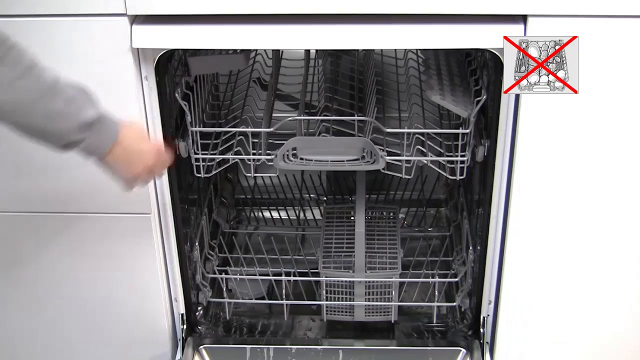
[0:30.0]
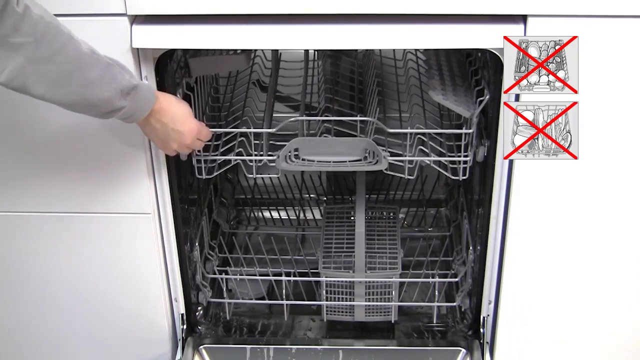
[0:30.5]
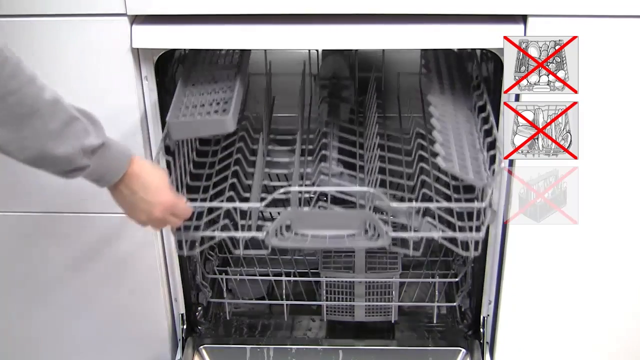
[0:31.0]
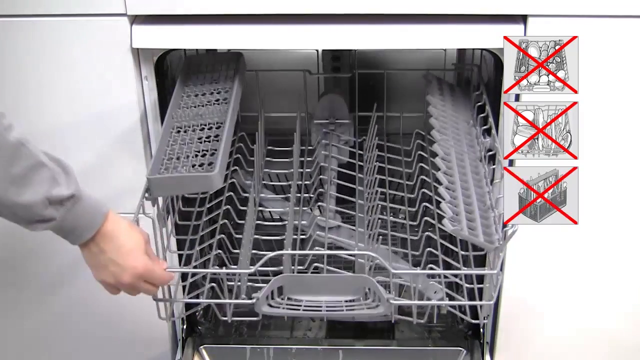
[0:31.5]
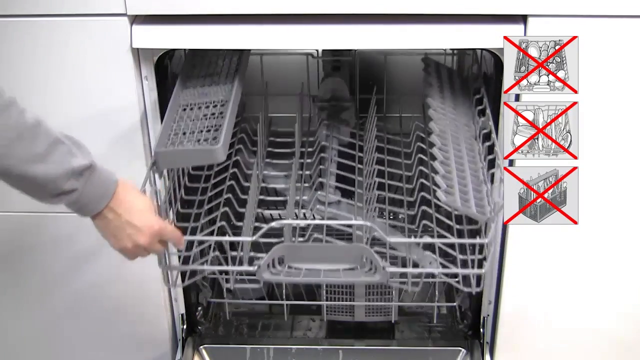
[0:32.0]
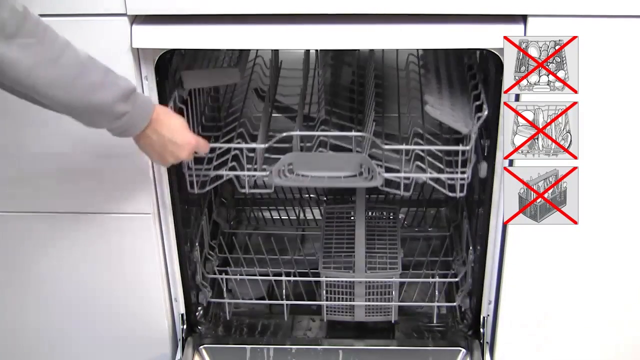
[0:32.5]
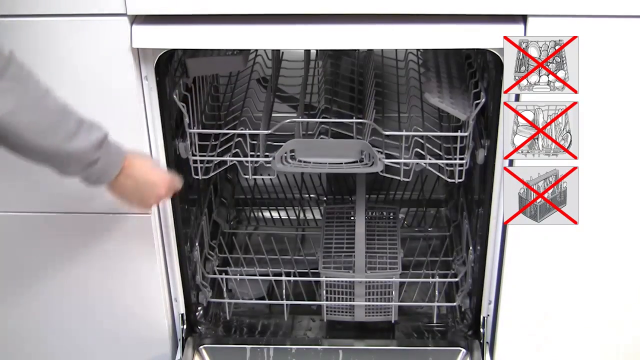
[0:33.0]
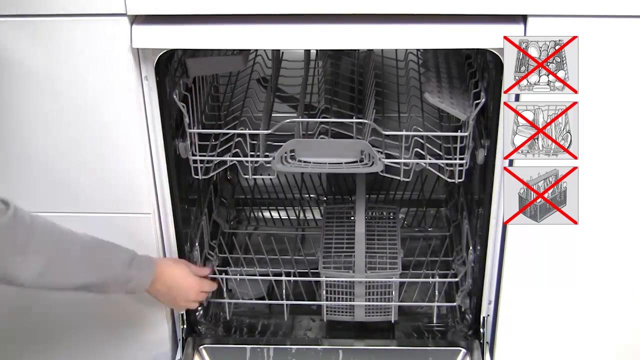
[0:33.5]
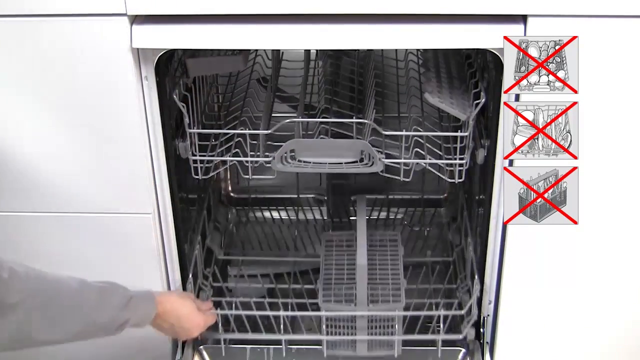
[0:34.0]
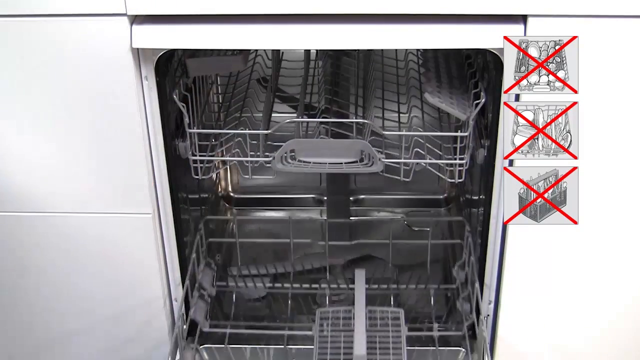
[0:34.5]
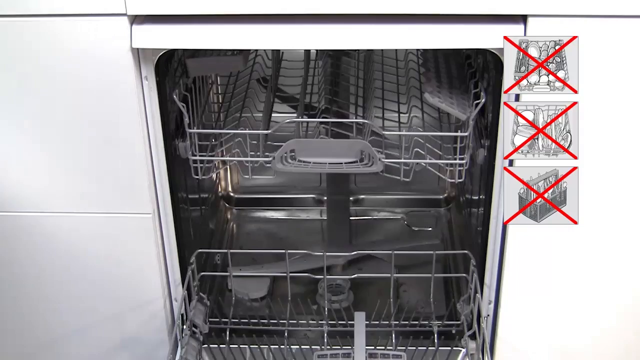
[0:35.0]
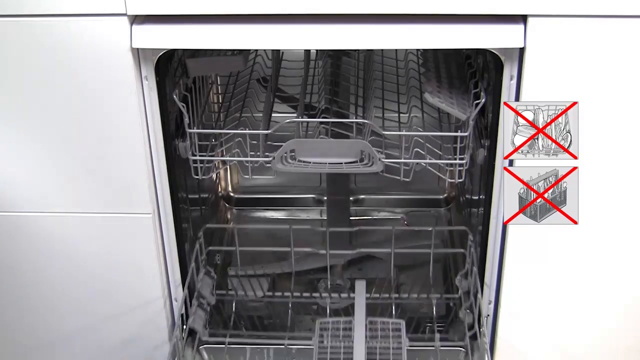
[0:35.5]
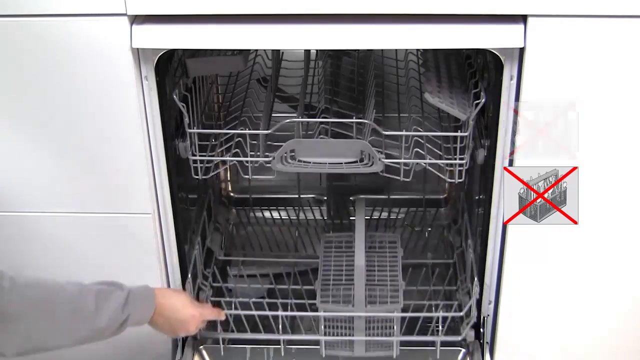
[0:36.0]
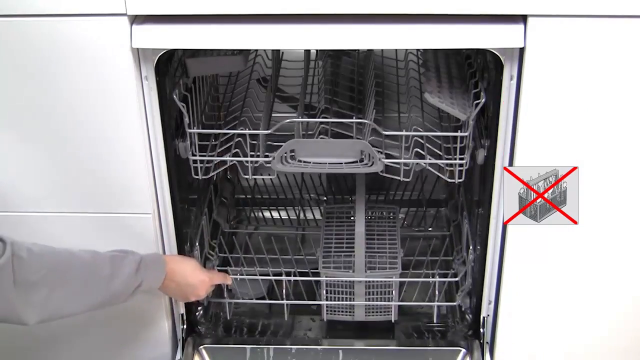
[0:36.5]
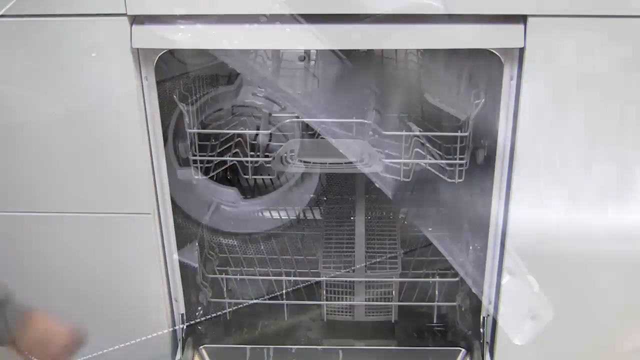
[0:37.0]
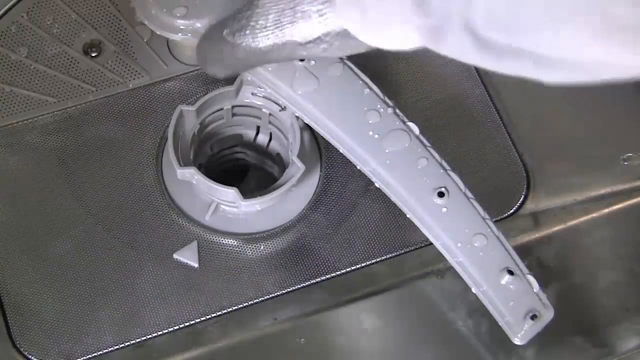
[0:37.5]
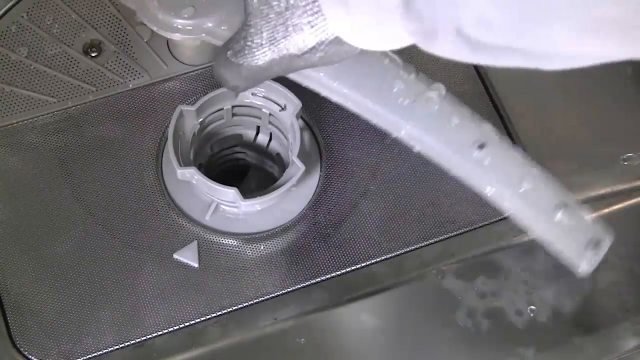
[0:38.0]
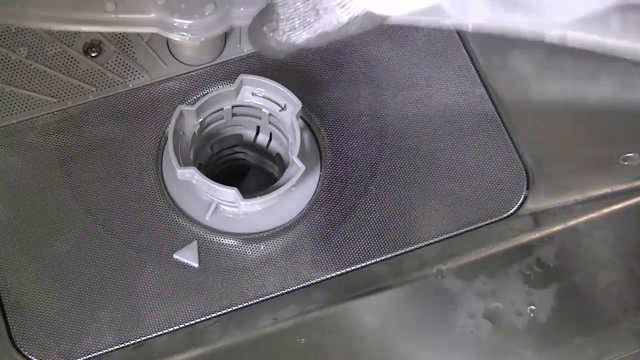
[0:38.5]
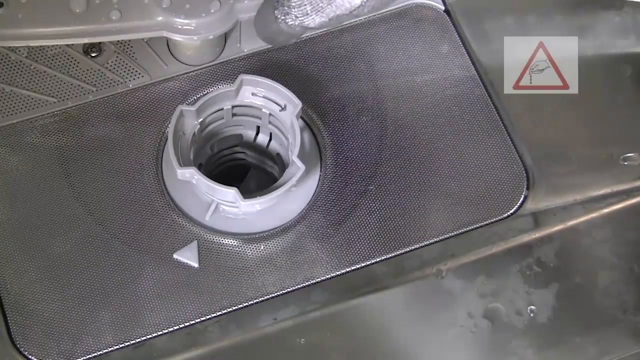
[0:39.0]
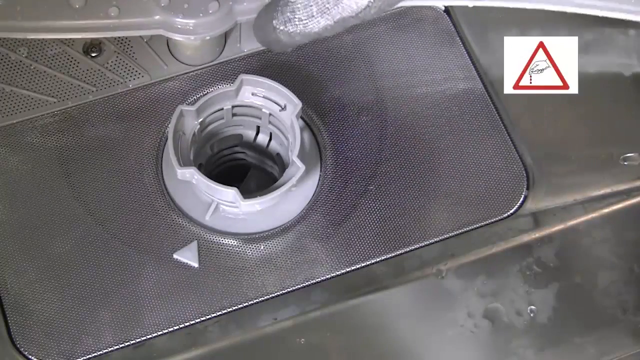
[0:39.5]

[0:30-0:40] With the dishwasher open, a small square at the top right of the screen shows an example of how the dishwasher is loaded, with a big X over it. As the top rack is pulled open, more icons appear: two more underneath the original icon, both also with Xs, and the third picture shows an example of the utensil basket filled. The person opens the top rack and closes it, then opens the bottom rack and closes that one. As it closes, the icons with Xs at the top right slowly disappear one by one: the first, the second and then the third. The next shot shows the inside of the dishwasher where the blades are. Someone wearing gloves holds the blade, the spinning part, and moves it, apparently trying to take it apart.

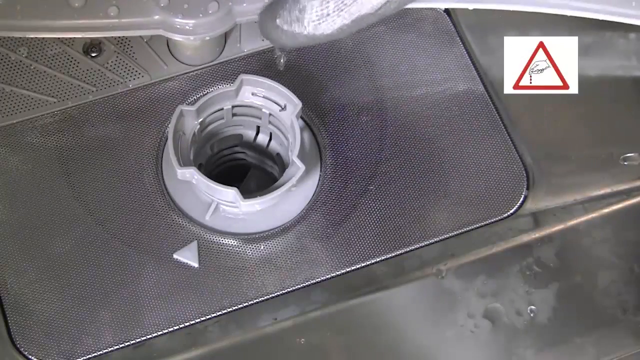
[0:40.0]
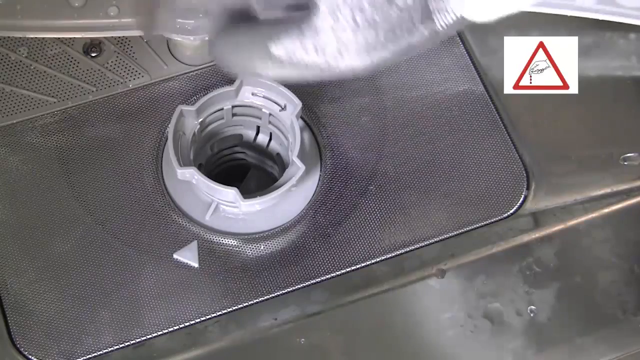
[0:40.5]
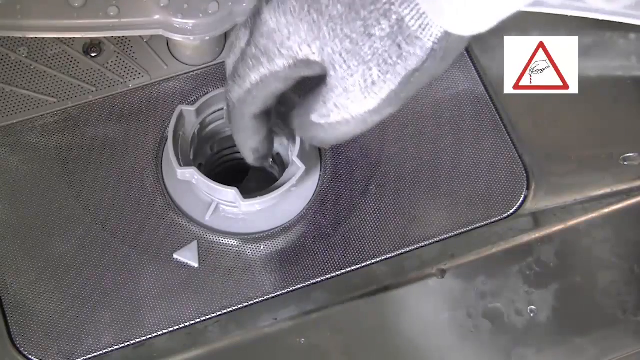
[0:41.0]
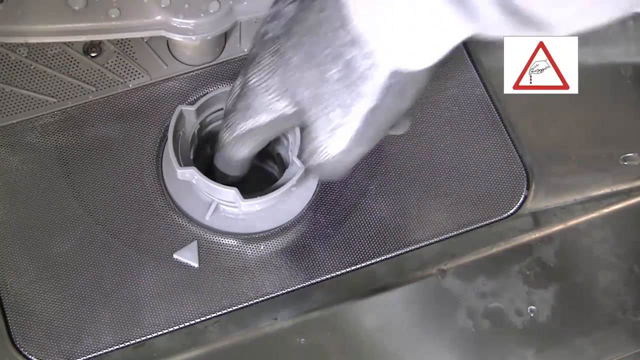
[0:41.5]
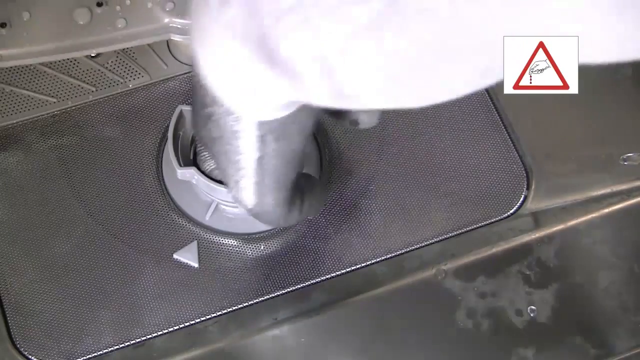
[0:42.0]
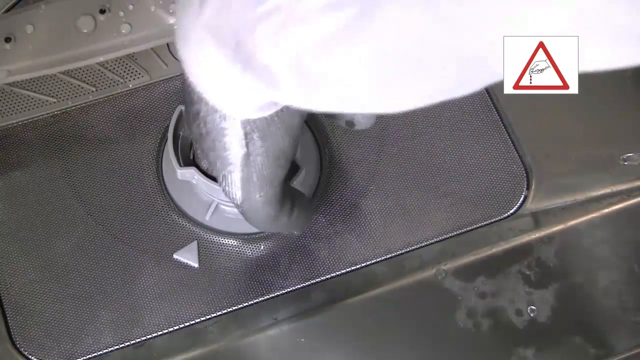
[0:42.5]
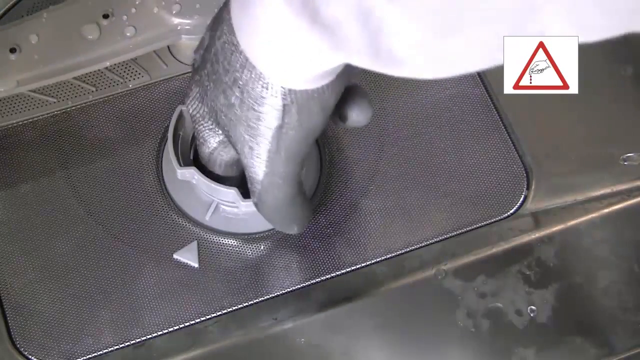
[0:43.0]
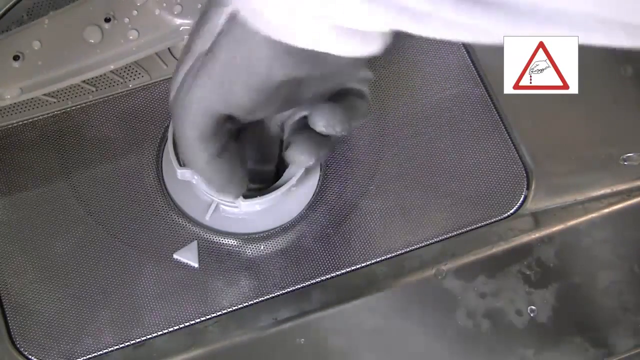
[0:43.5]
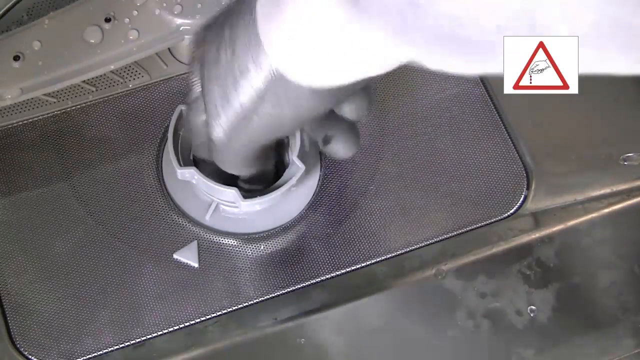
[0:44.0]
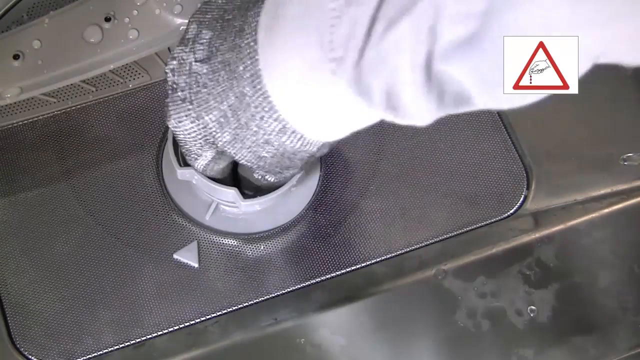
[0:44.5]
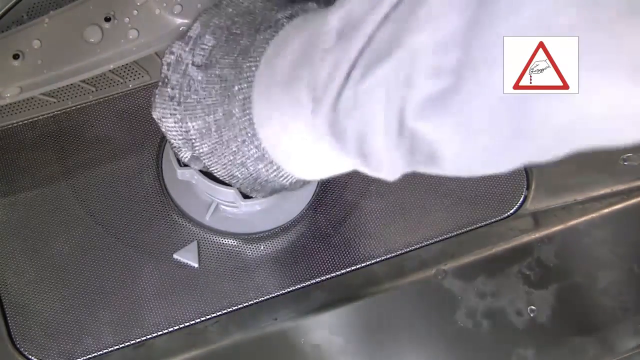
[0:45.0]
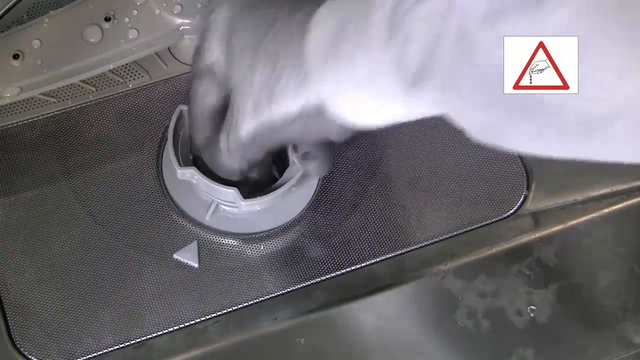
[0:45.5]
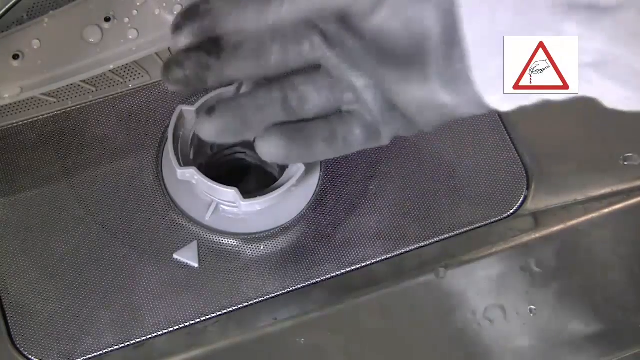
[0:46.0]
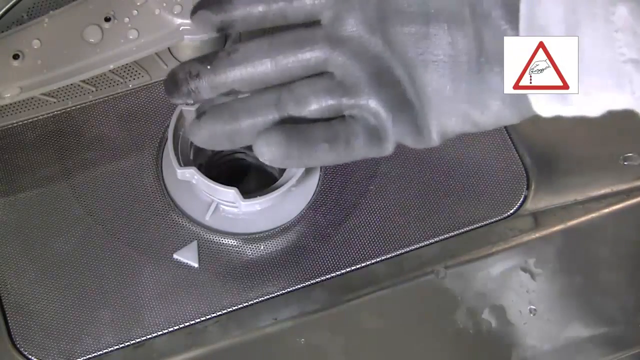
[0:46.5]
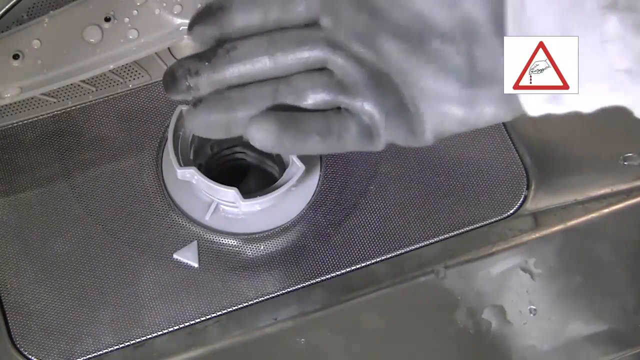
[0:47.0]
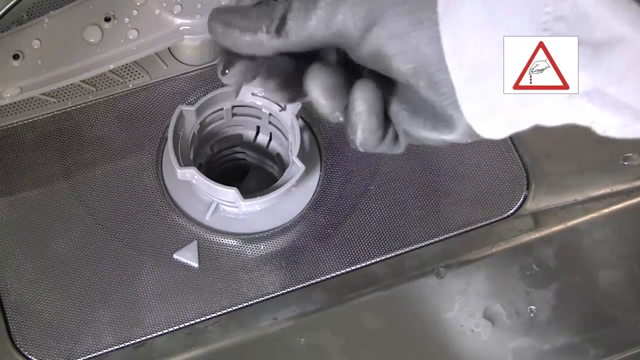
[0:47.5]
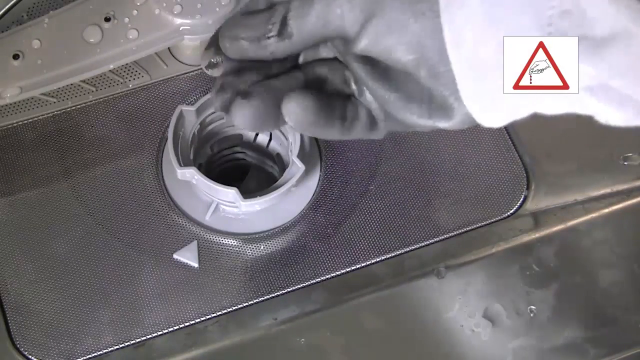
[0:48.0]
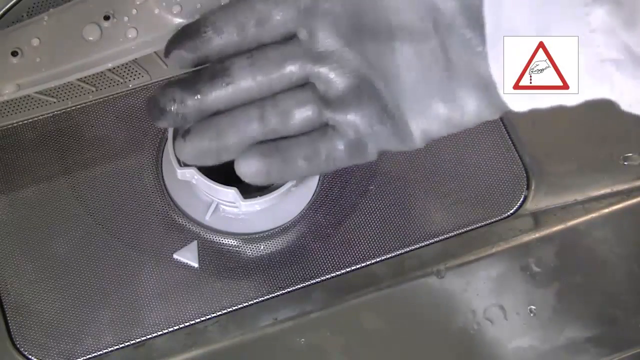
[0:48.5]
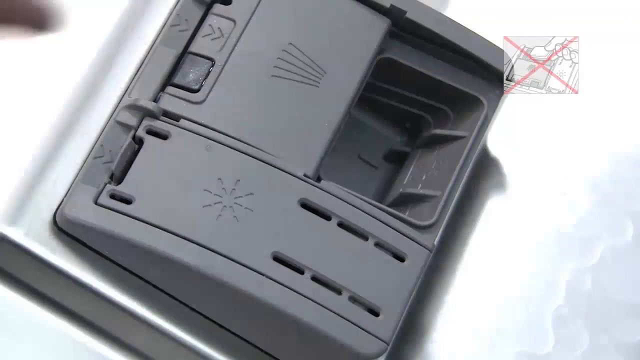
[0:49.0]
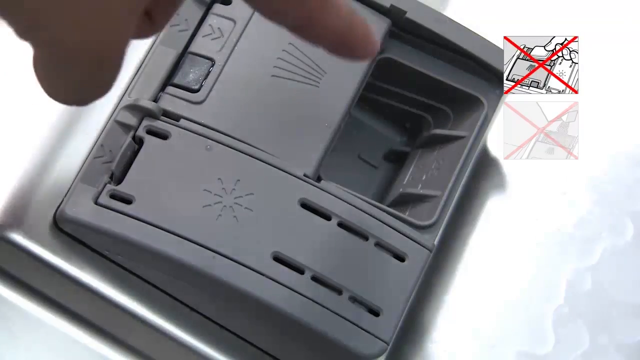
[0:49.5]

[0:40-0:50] The person's gloved right hand goes into the hole that held the blade, sticking the fingers and thumb into it. They take the hand out and show the palm, which is a bit wet at the index and middle fingers, rub the fingers together, and show it again. The next shot shows the compartment for dishwashing tablets, which the person points at with the index finger of their left hand. The tablet compartment is open and empty; it is grey with a white background. Icons with Xs on them appear at the top right, showing what not to do.